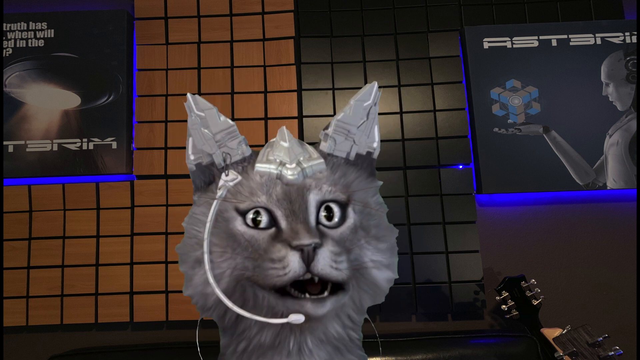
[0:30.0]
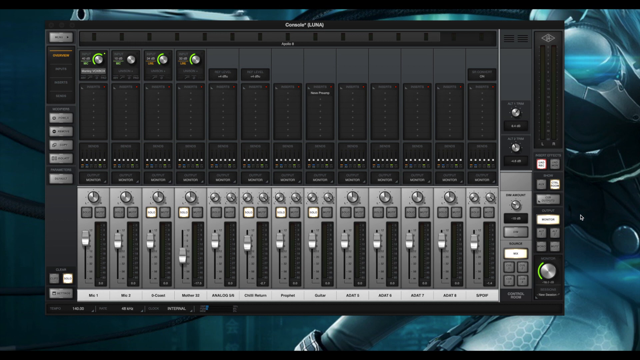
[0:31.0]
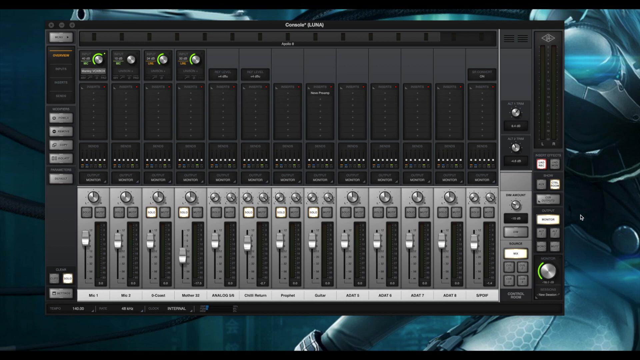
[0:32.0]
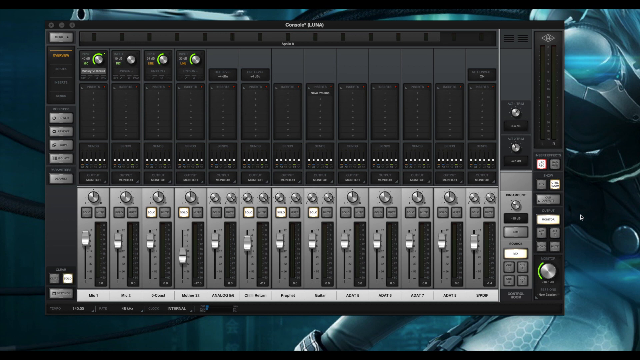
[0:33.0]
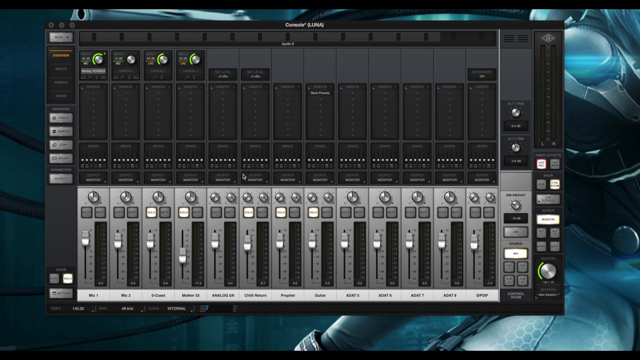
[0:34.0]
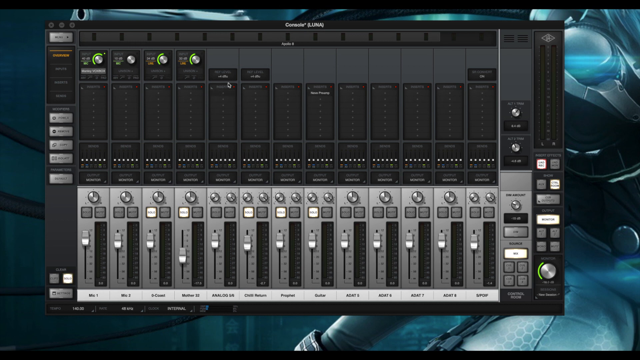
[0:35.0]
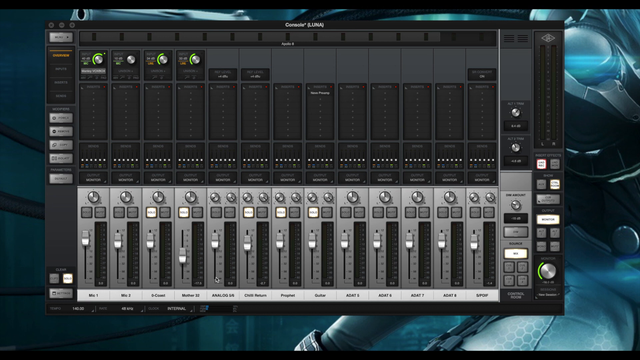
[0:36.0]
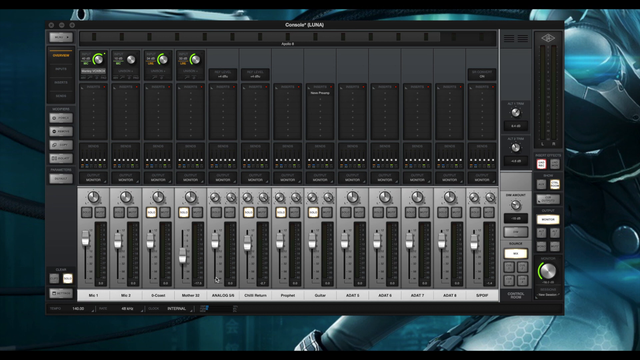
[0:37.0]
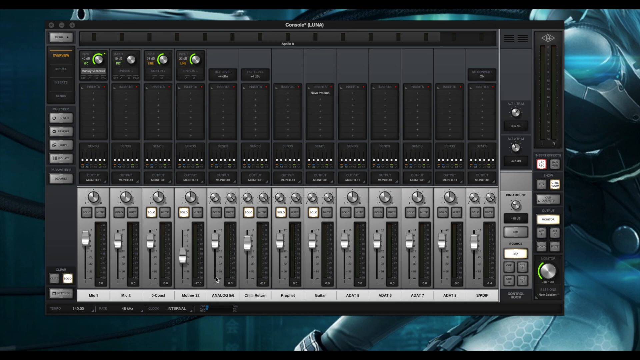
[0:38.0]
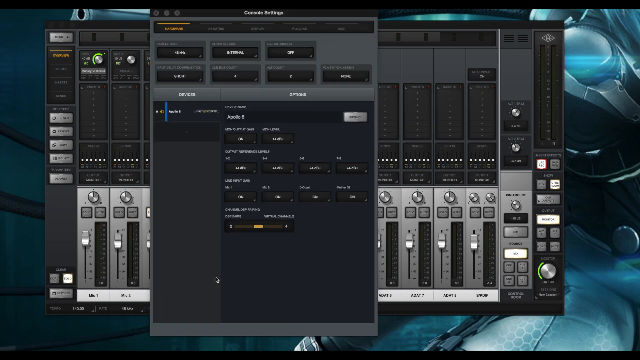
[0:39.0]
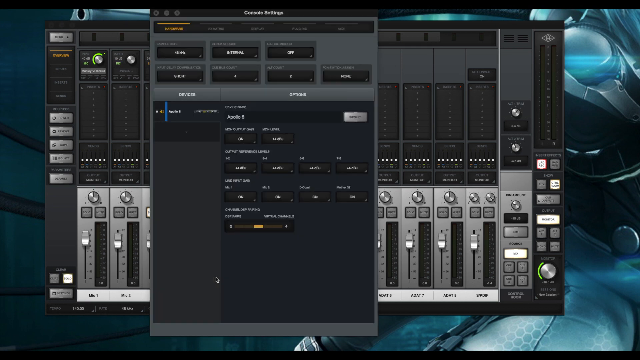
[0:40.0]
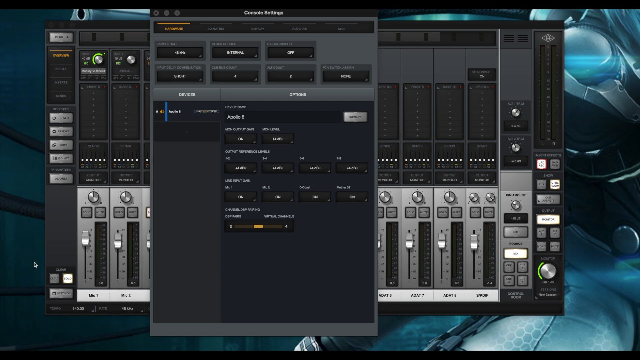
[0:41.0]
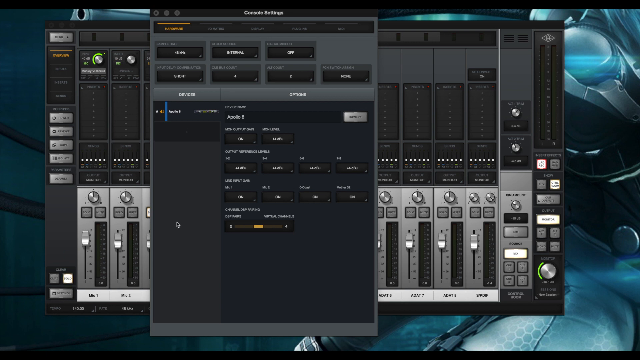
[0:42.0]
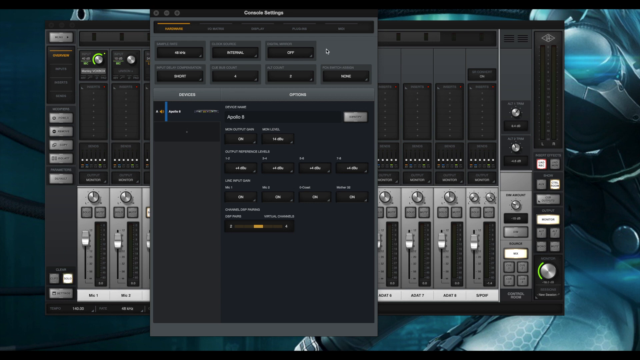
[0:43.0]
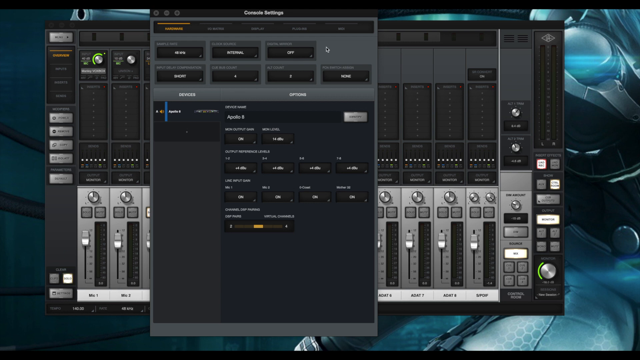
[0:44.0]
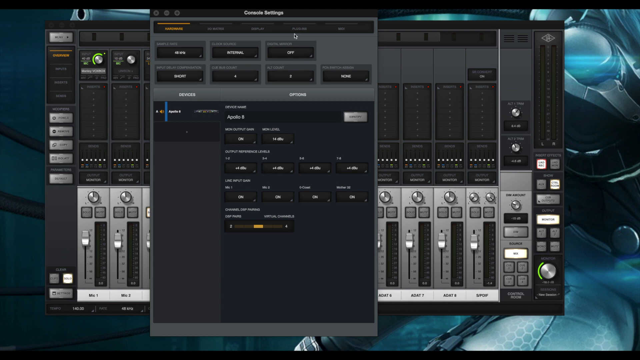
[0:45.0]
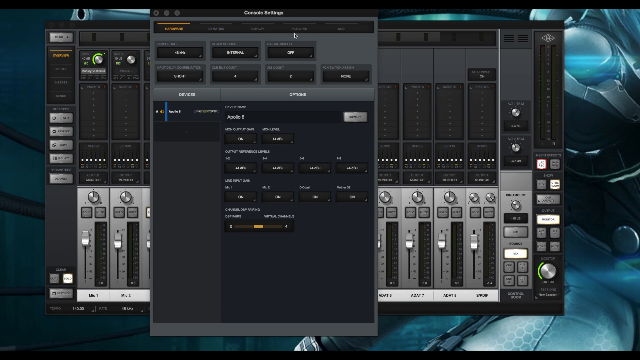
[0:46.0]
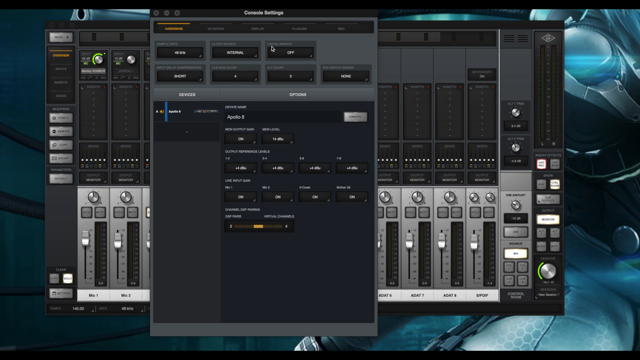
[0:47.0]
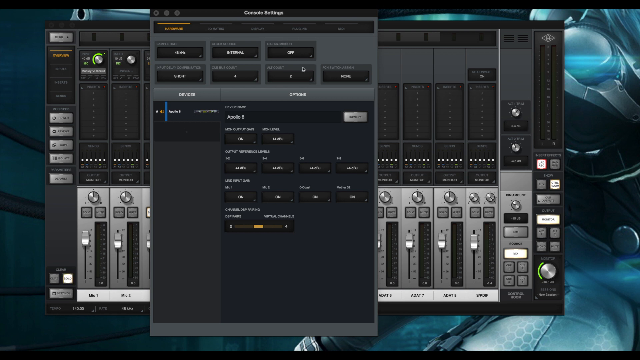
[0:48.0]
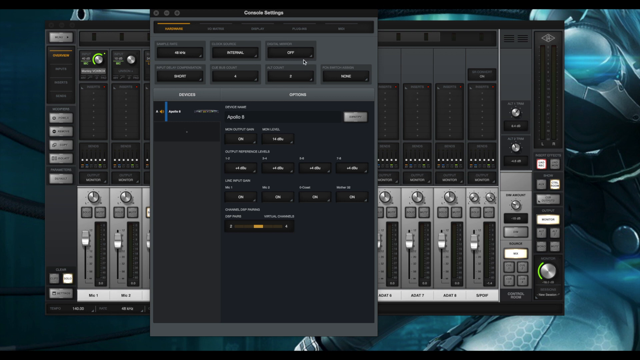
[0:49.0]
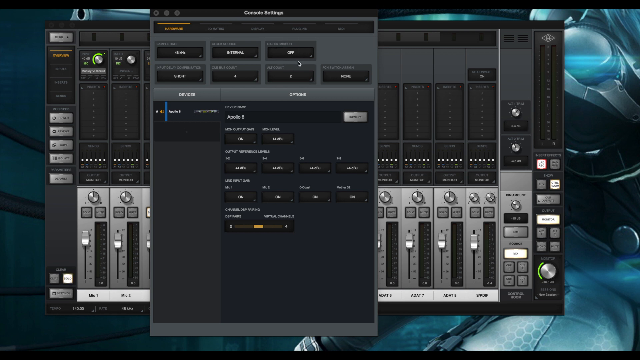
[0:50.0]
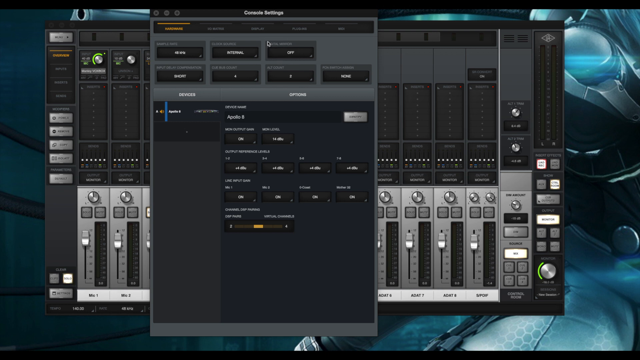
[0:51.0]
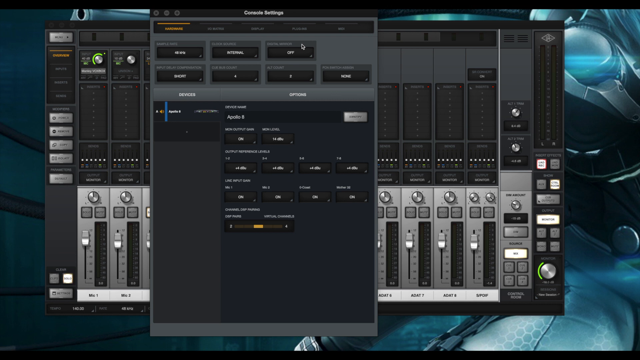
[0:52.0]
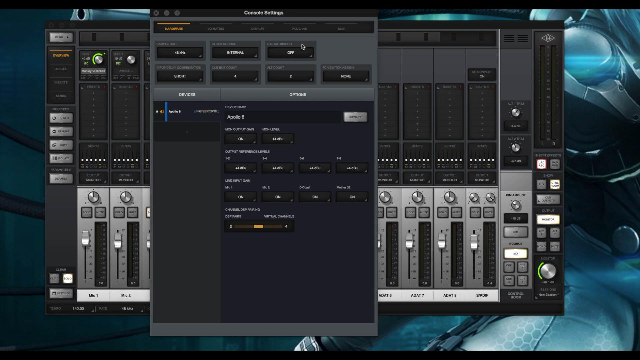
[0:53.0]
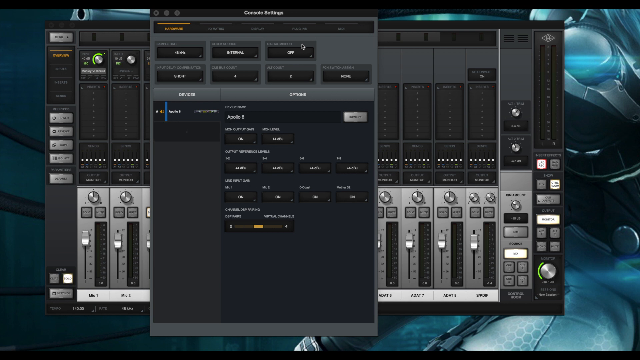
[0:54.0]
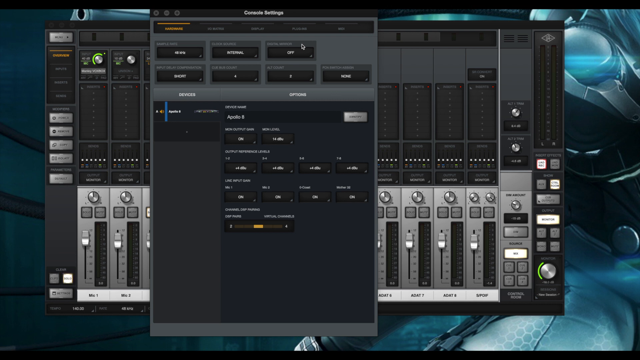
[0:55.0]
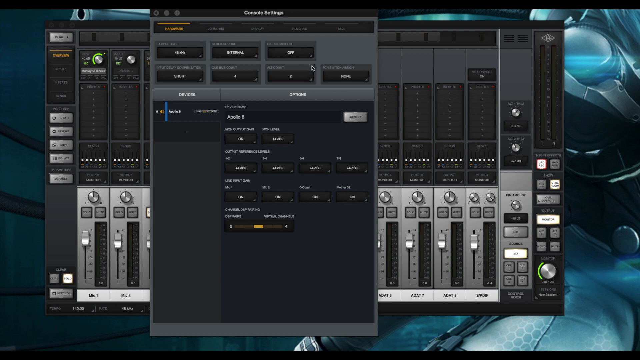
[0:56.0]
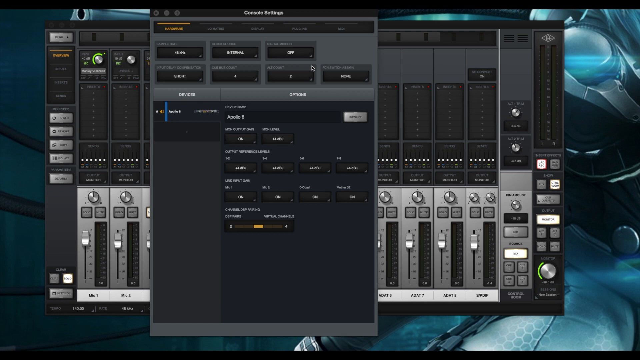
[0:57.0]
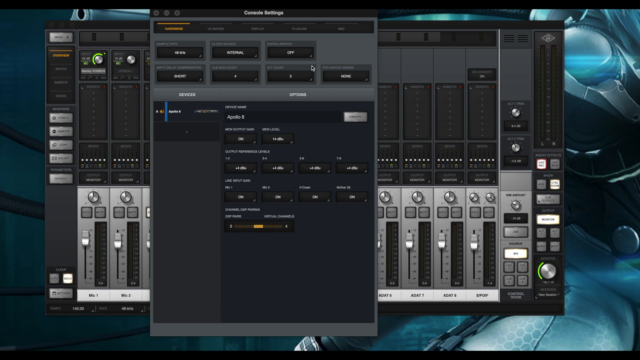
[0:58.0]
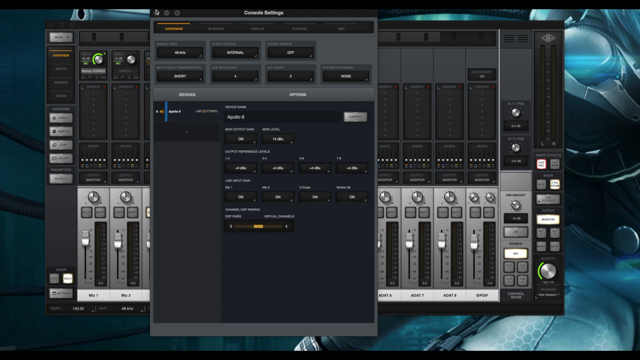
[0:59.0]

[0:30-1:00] The cat speaks before the video cuts again to some kind of music software, which appears to be almost a mixing program, with many notches and dials that can be moved up and down, almost like a DJ deck. A mouse cursor moves around the screen and clicks somewhere, and a new window opens that reads "console settings" at the top. The cursor hovers over one of the settings, which is not legible because of the video quality; the setting is set to off, and the cursor circles it. The window is then closed without the setting being toggled back on. At the bottom of the program are different mixes, including "mix one" and "mix two", along with other hard-to-read words, among them "guitar" and possibly something with "chill". These may be different tracks or layers of a song that can be adjusted, and the video appears to be some kind of tutorial for music software or making music.